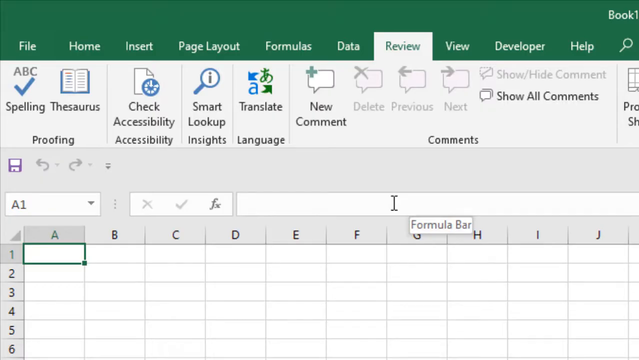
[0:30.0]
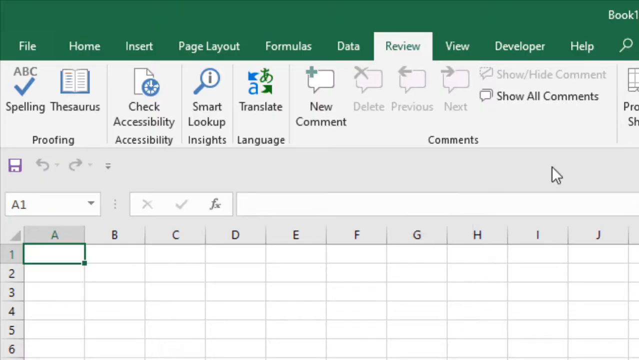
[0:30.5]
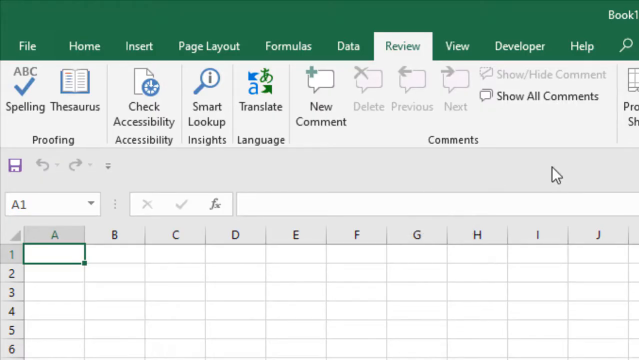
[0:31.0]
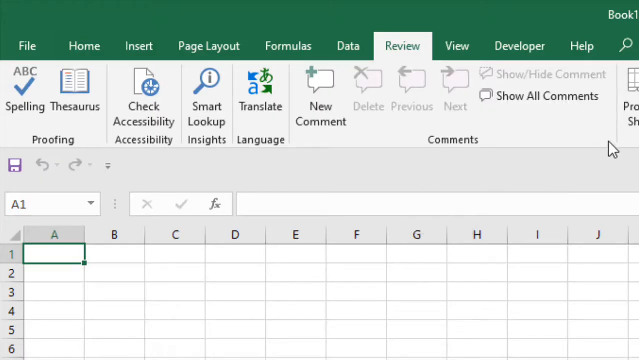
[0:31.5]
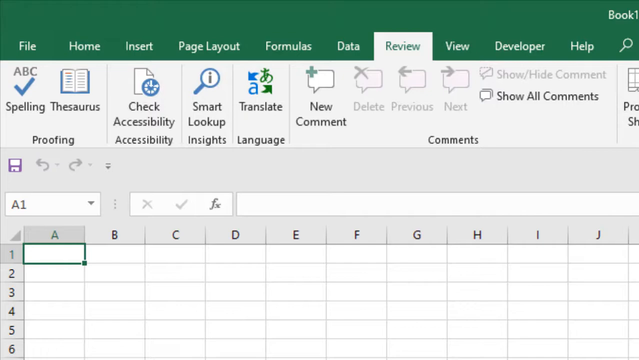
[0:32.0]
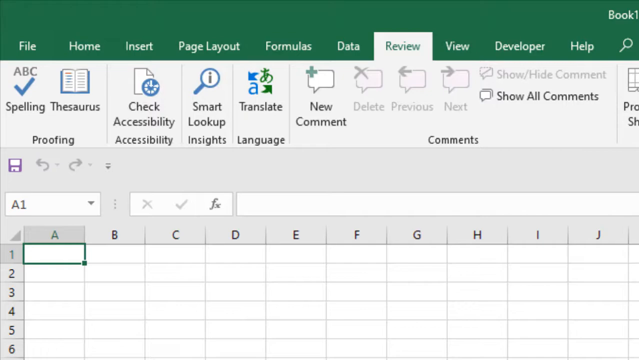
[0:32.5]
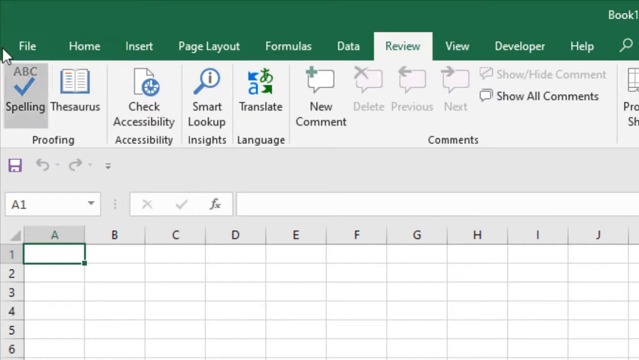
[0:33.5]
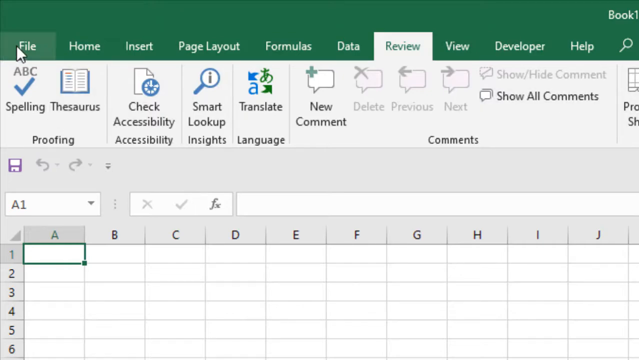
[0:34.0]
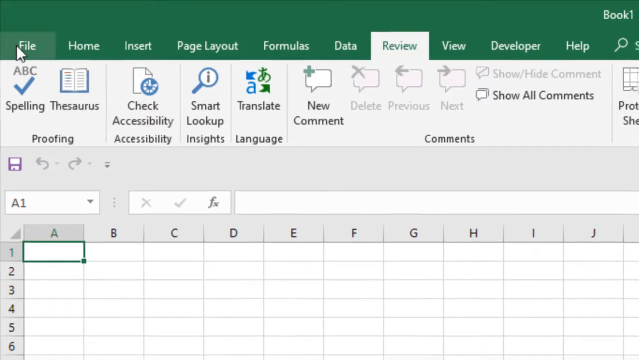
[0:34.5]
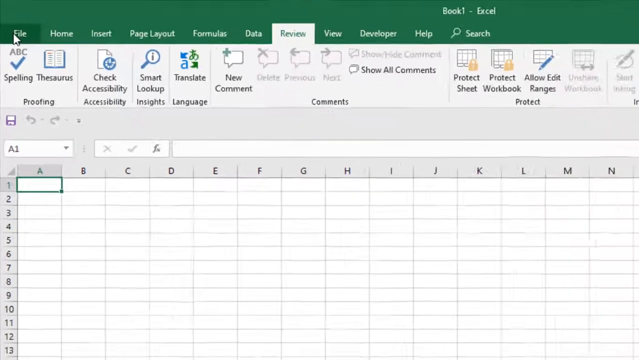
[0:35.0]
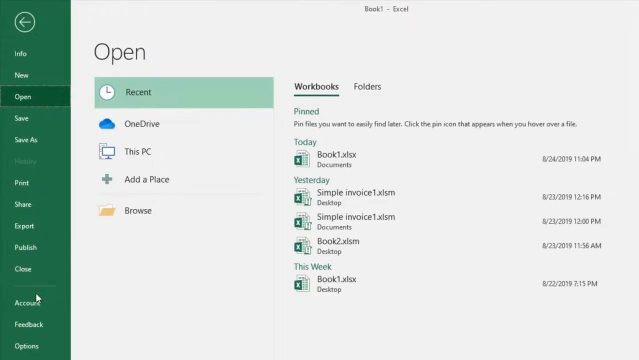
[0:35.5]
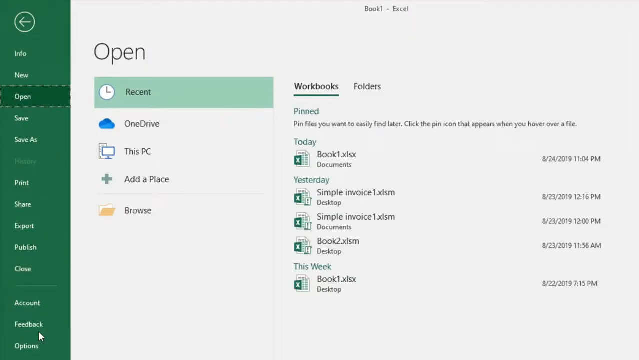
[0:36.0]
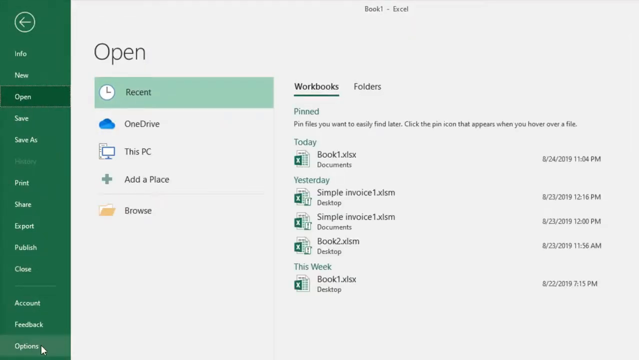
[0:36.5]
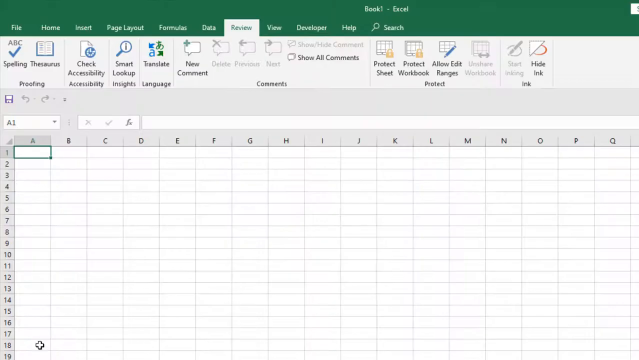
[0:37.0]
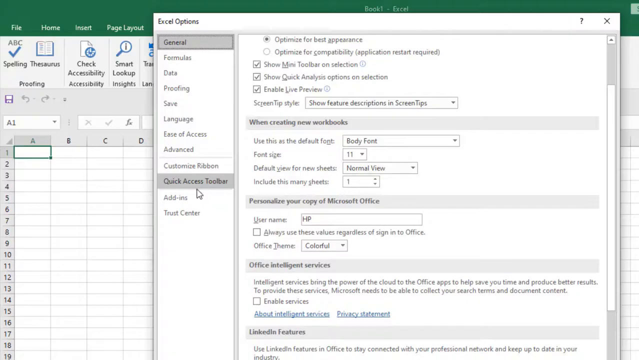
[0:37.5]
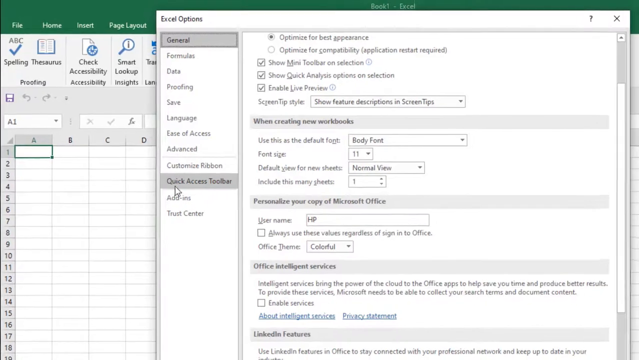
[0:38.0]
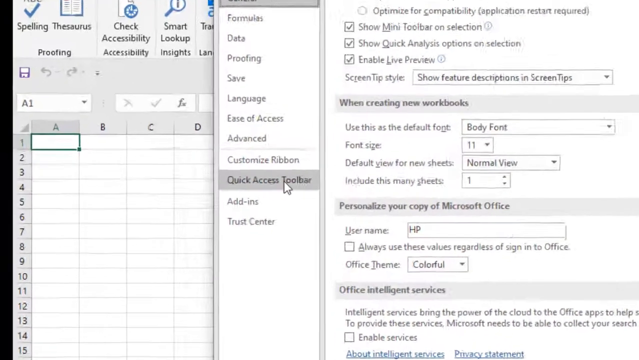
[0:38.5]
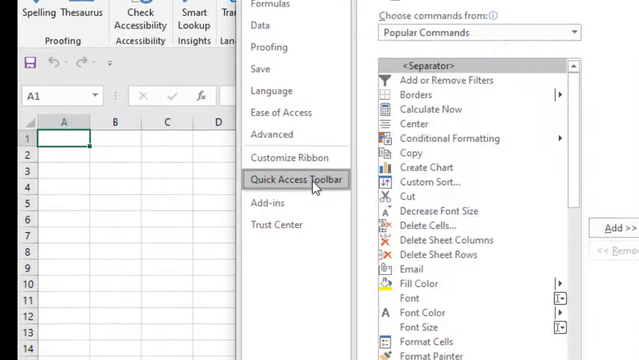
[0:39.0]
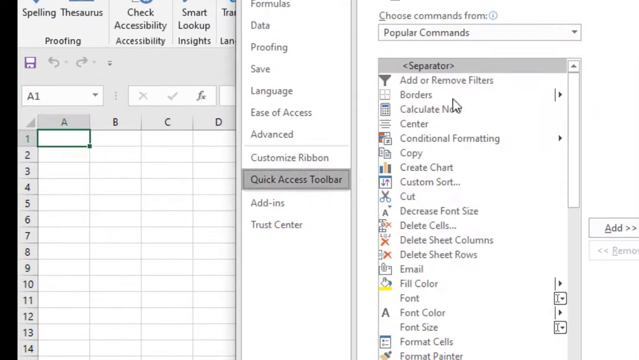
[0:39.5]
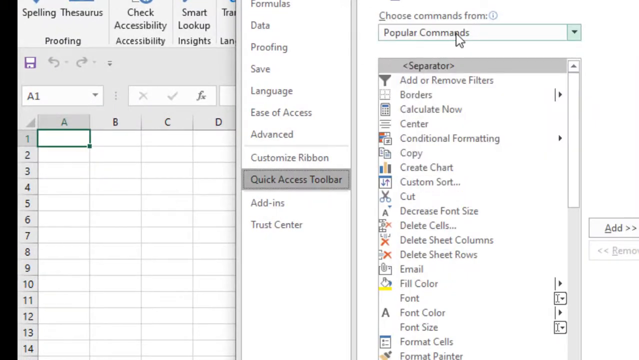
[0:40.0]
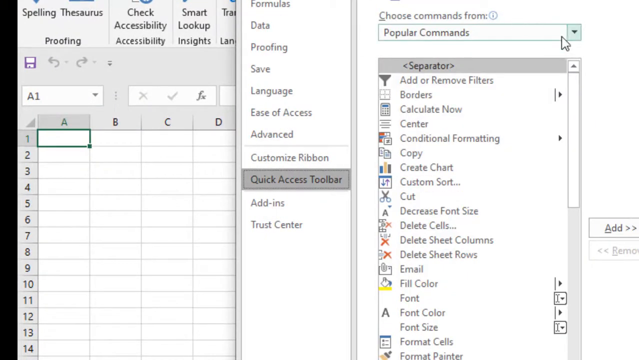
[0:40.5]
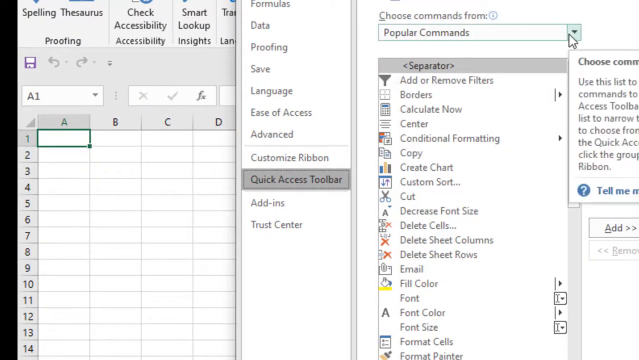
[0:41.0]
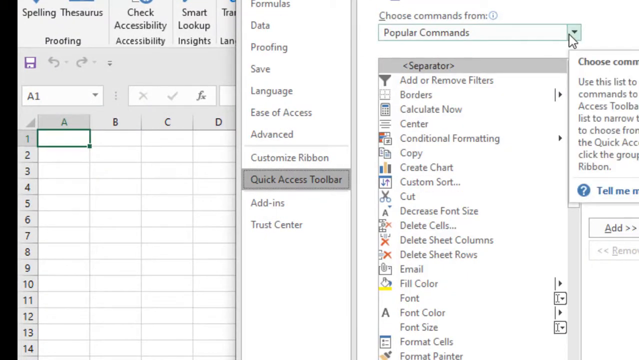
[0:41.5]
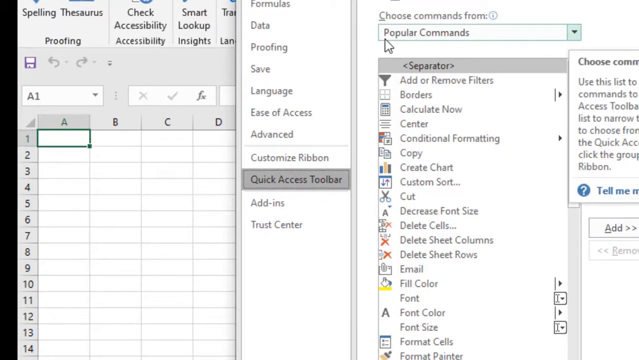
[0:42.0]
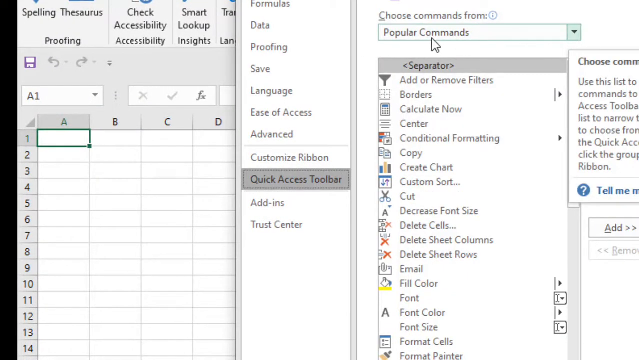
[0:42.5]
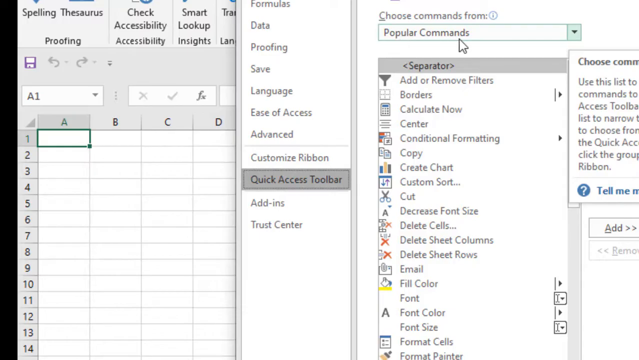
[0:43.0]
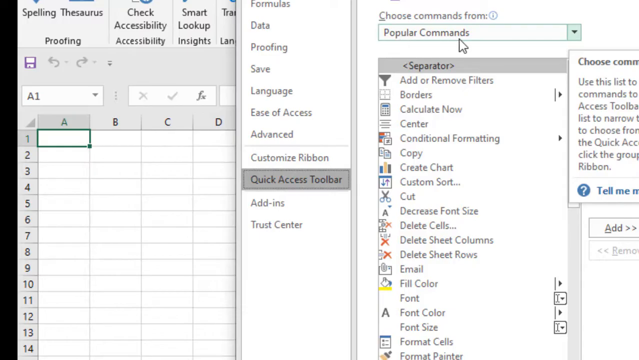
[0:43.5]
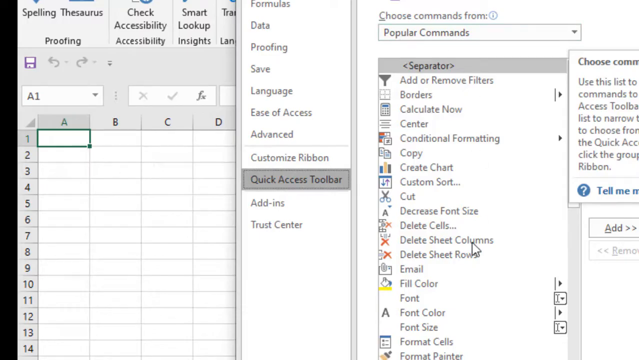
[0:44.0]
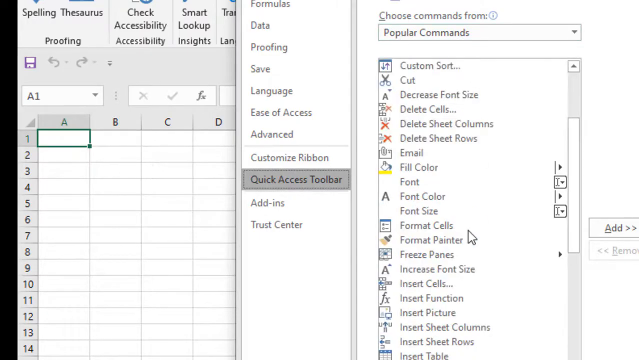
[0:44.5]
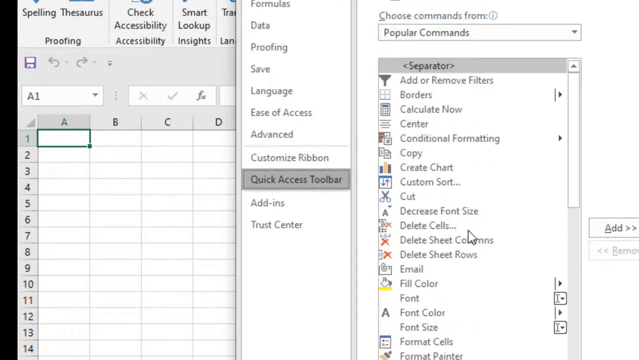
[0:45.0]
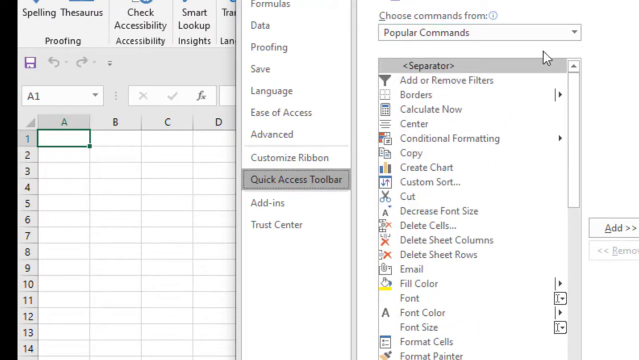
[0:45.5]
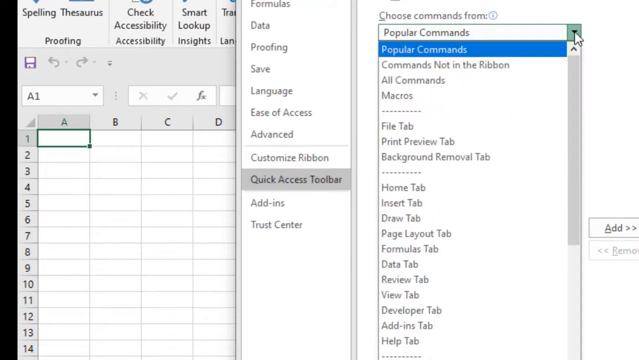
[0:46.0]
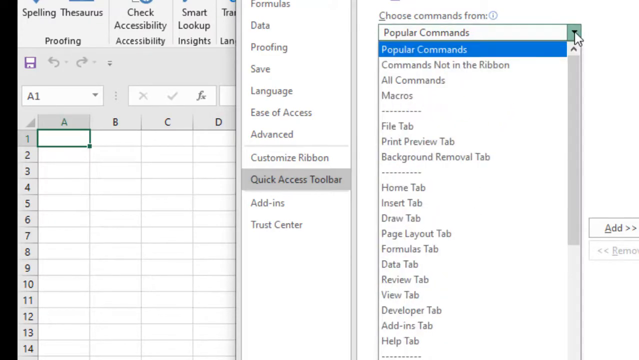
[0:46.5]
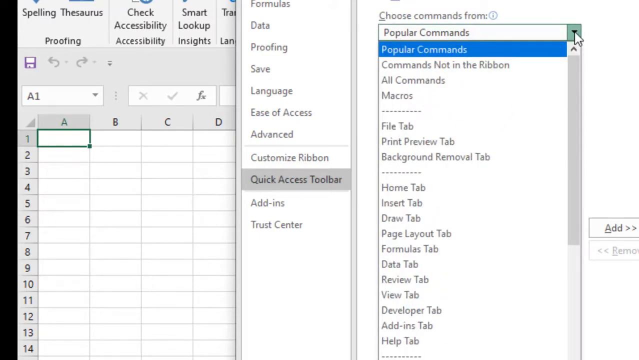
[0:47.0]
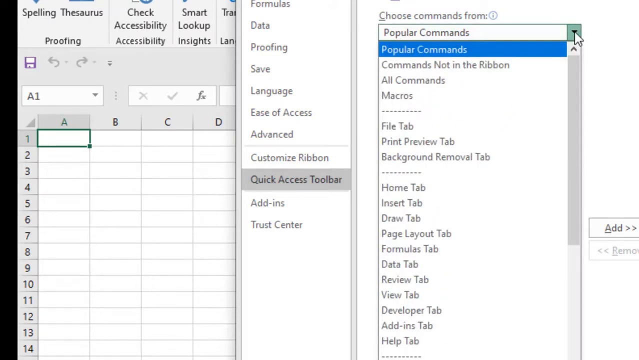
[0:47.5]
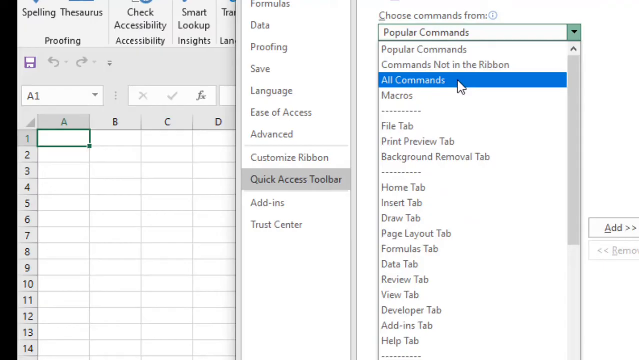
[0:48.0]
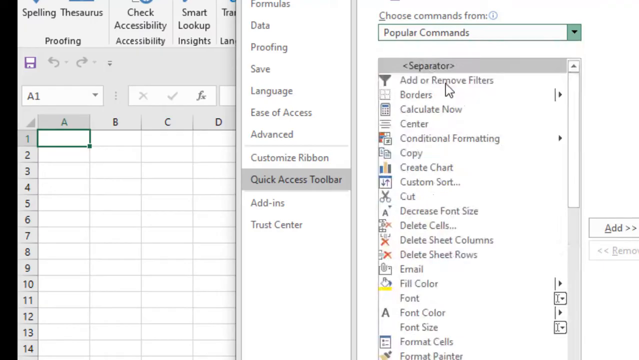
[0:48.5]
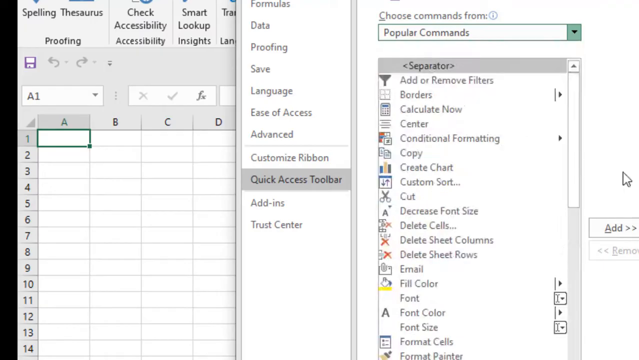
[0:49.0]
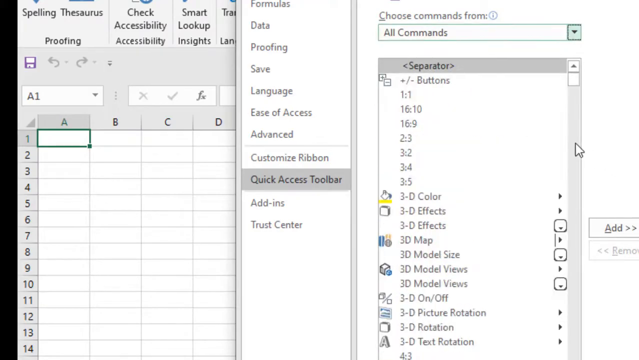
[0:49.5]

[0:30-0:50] Microsoft Excel is open, with tabs for File, Home, Insert, Page Layout, Formulas, Data, Review, View, Developer and Help, plus a Search bar. Options shown include Spelling, Thesaurus, Proofing, Check Accessibility, Smart Lookup, Insights, Translate, Language, New Comment, Comments, Show All Comments and Show/Hide Comments. There is a small Save button, many empty cells, and a formula bar with the mouse hovering over it. The mouse moves off the screen and sort of around the page, then goes to File. The camera zooms out and a page that says "Open" appears, with Recent, OneDrive, This PC, Add a Place and Browse. Several documents are listed under Workbooks. A Pinned section reads "Pinned Files you want to easily find later. Click the pin icon that appears when you hover over a file." There is another section called Folders. On the left side are options including Info, New, Open, Save, Save As, Print, Share, Export, Publish and Close, as well as Account and Feedback. The user closes this and goes to a settings window titled "Excel Options", which lists General, Formulas, Data, Proofing, Save, Language, Ease of Access, Advanced, Customize Ribbon, Quick Access Toolbar, Add-ins and Trust Center. The camera zooms in on Quick Access Toolbar, and the user clicks it, opening a page showing "Choose Commands from" set to "Popular Commands". The user clicks or hovers over a dropdown box, then scrolls through options including Add or Remove Filters, Borders, Calculate Now, Center, Conditional Formatting, Copy, Create Chart, Custom Sort, Cut, Decrease Font Size, Delete Cells, Delete Sheet Columns, Delete Sheet Rows, Email, Fill Color, Font, Font Color, Font Size and Format Cells. Clicking the dropdown box reveals options including Popular Commands, Commands Not in the Ribbon, All Commands, Macros, File Tab, Print Preview Tab, Background Removal Tab, Home Tab, Insert Tab, Draw Tab, Page Layout Tab, Formulas Tab, Data Tab, Review Tab, View Tab, Developer Tab, Add-in Tab and Help Tab. The user then sort of clicks and scrolls slightly.